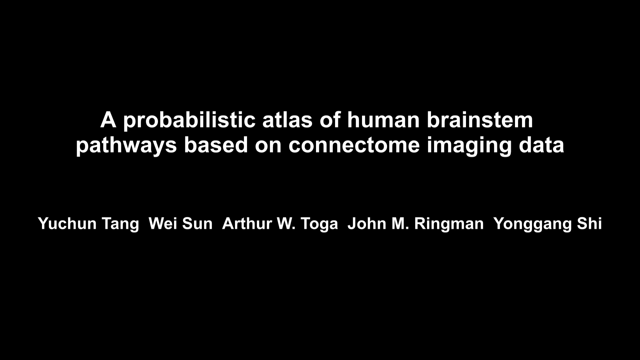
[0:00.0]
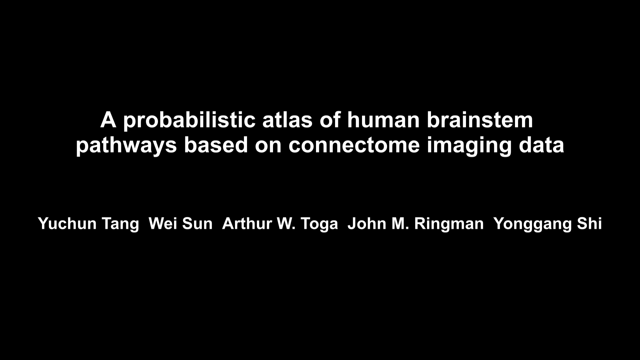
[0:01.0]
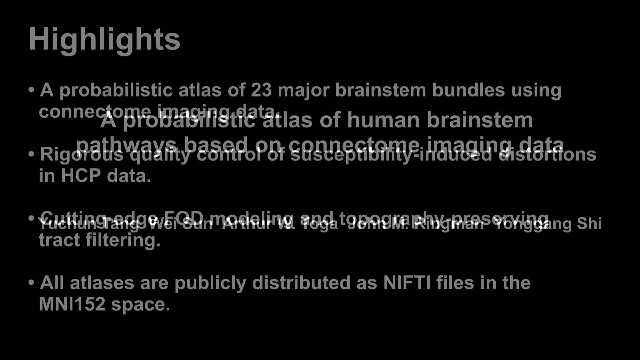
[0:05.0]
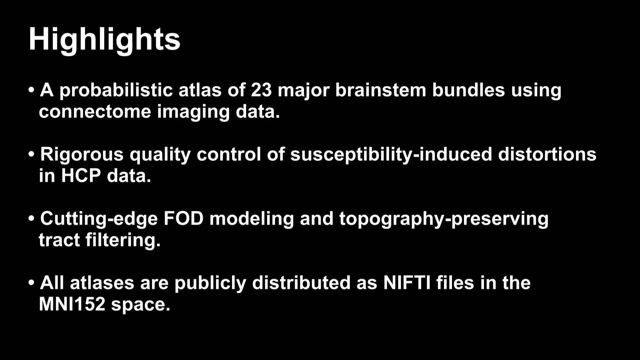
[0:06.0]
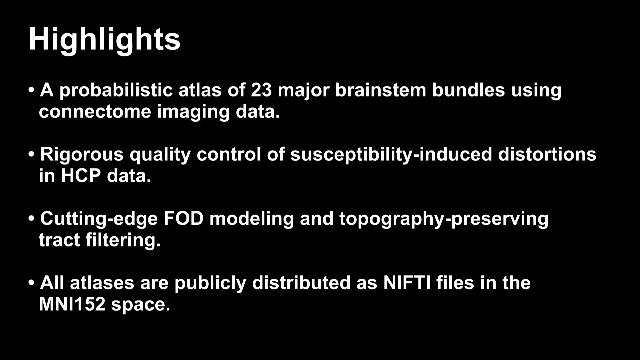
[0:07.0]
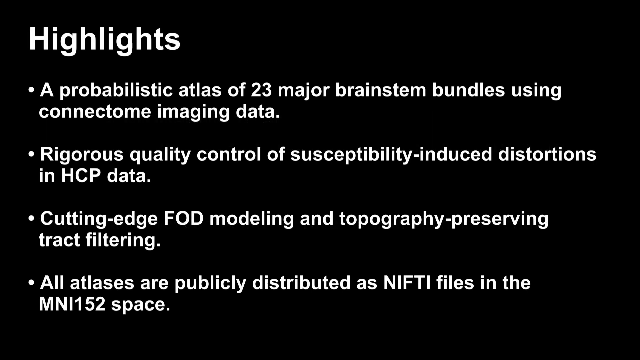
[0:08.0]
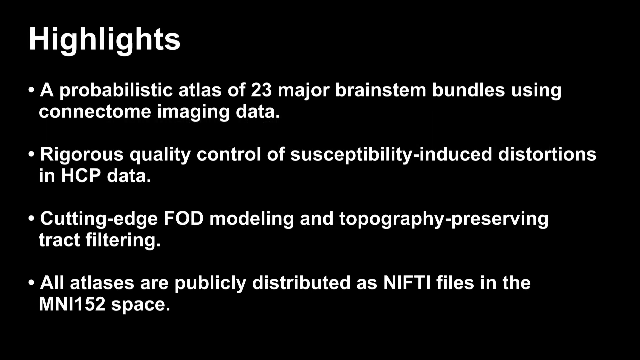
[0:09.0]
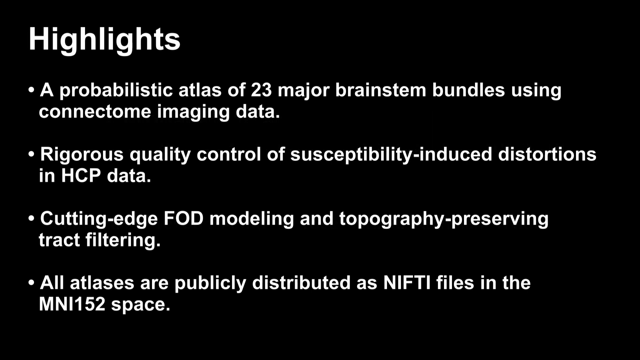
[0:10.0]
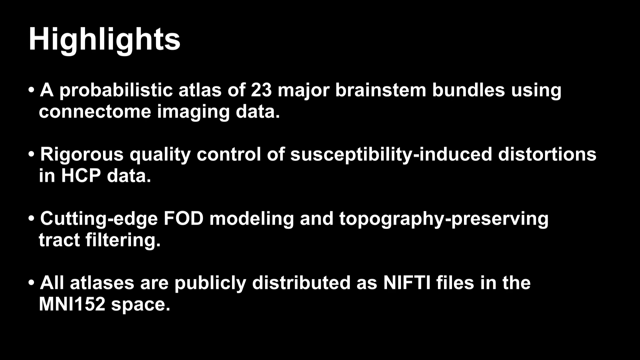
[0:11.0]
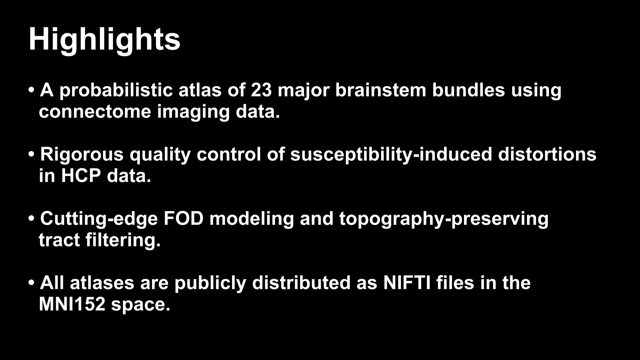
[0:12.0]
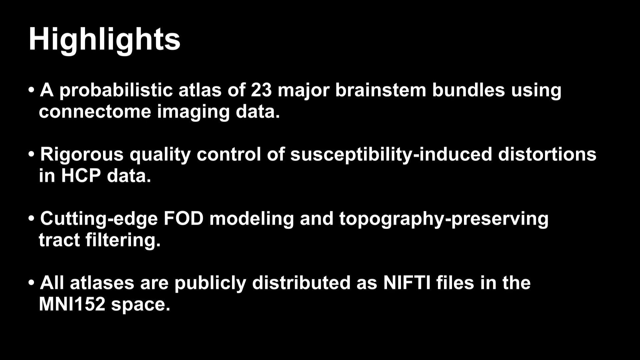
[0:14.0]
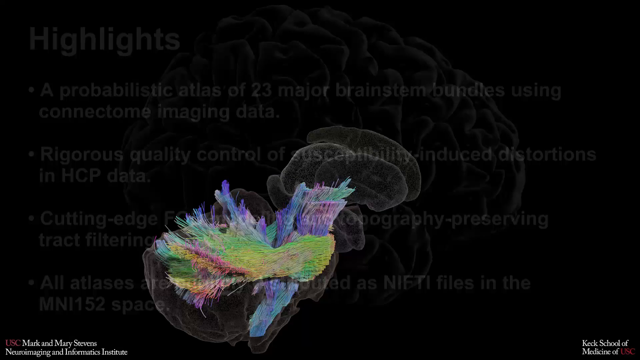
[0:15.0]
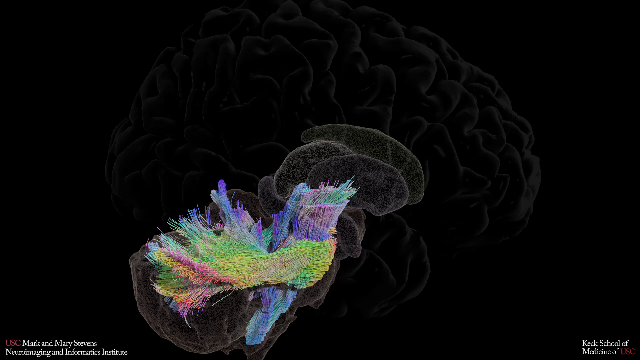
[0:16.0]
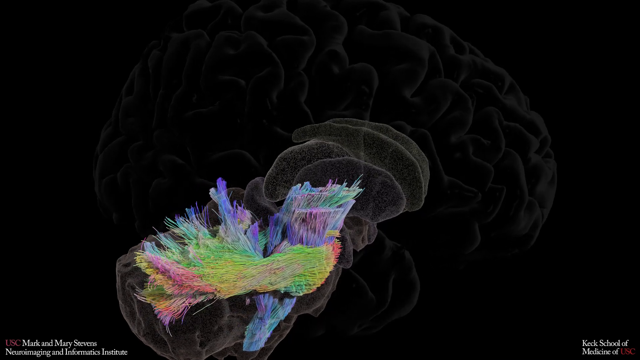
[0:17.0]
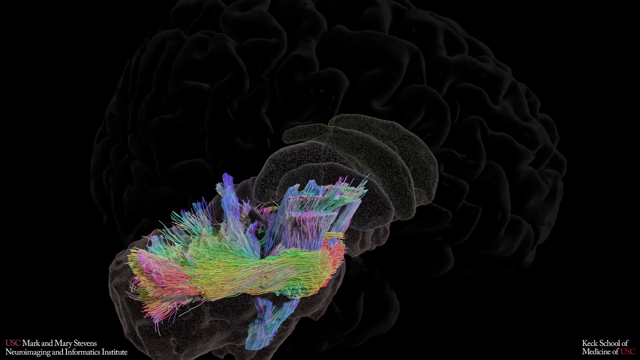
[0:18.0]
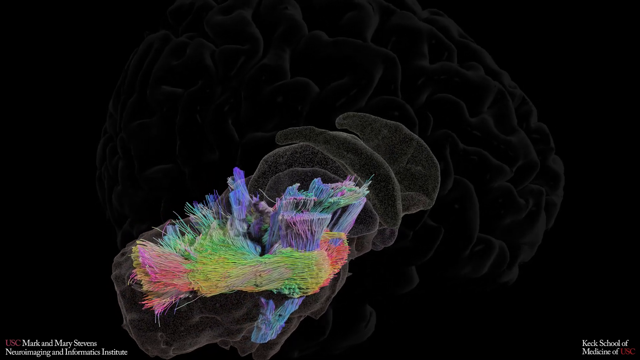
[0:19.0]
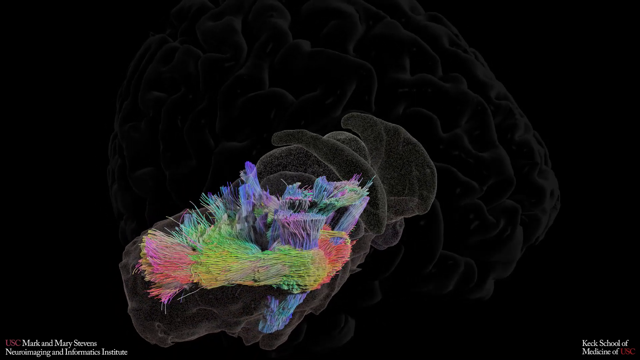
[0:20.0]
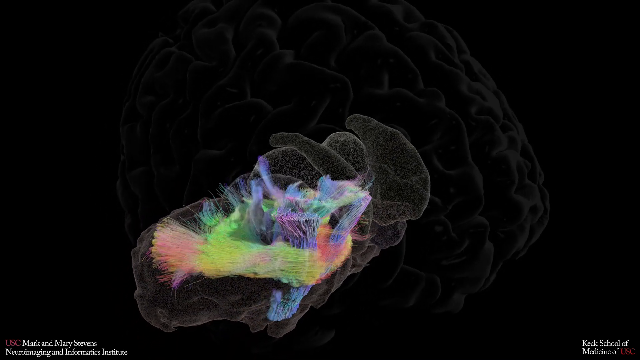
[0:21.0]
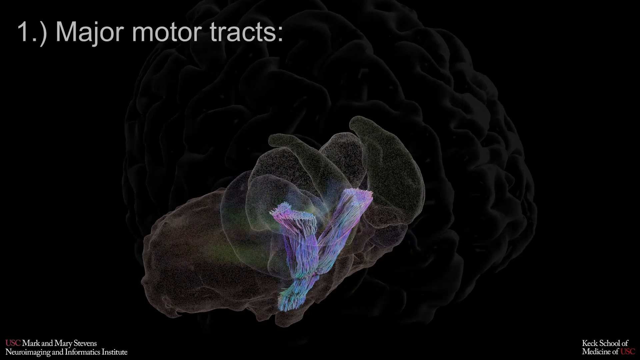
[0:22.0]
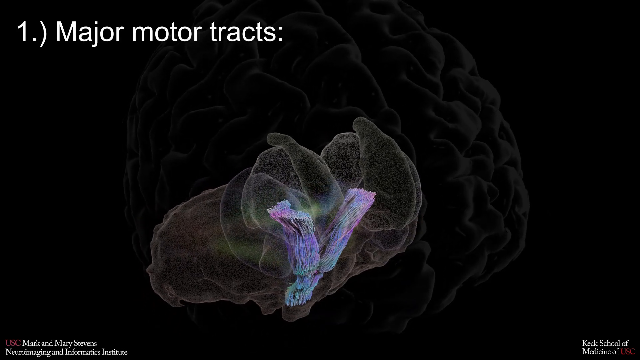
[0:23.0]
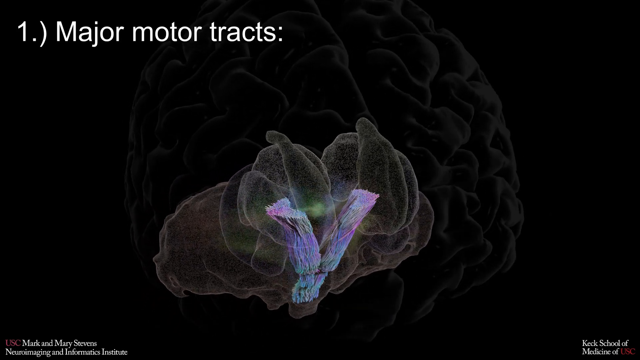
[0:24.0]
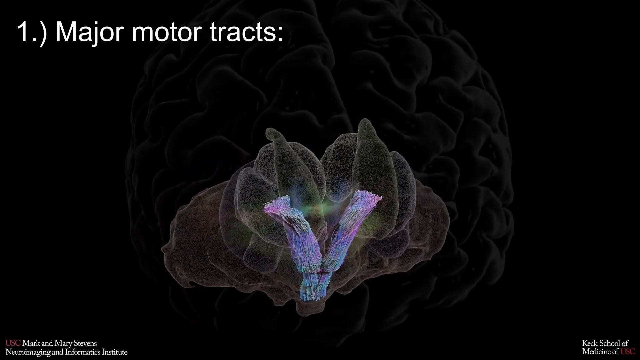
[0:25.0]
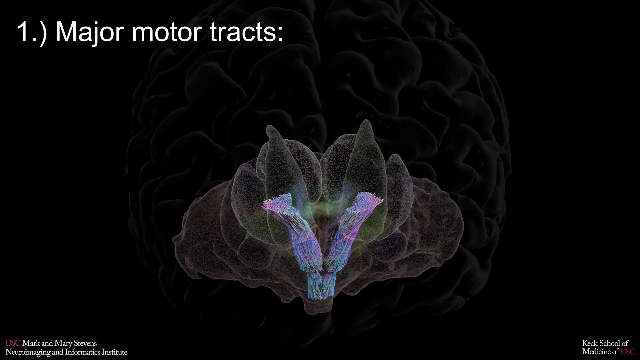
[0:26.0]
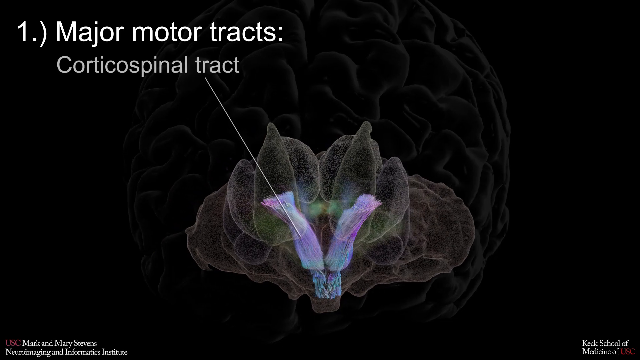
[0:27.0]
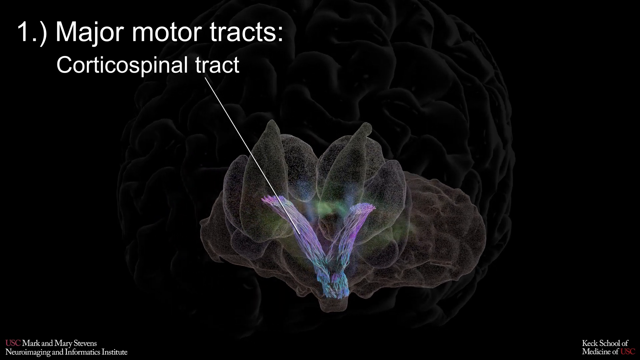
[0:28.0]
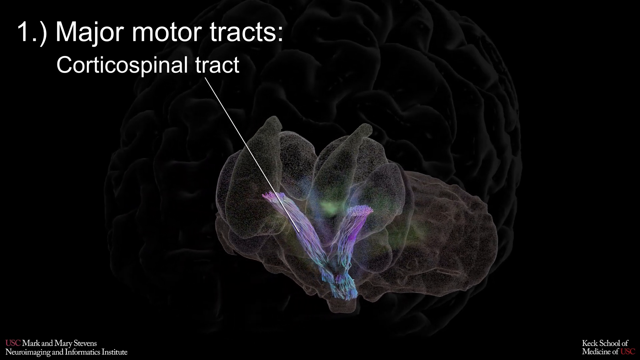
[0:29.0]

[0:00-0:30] White text on screen reads "a probabilistic atlas of human brain stem pathways based on connectome imaging data," along with the names "Yunchen Tang, Wee Sun, Arthur W. Toga, John M. Ringman, and Xiong Yang Shi." This stays on screen for a while, then changes to more text: "highlights: a probabilistic atlas of 23 major brainstem bundles using connectome imaging data, rigorous quality control susceptibility induced distortions and HCP data, cutting edge FOD modeling and topography preserving track filtering, all atlases are publicly distributed as NIFTI files in the MNI152 space." That text also stays on screen for a while before transitioning to what looks like a kind of transparent brain, with another component of the brain in a lighter gray color and many differently colored fibers: purple, green, yellow, teal, blue and more. The camera moves, kind of showing the brain moving with it. Then all of the fiber-looking materials kind of disappear, leaving only two bigger parts. White text appears reading "one major motor tracts," and more white text pops up reading "corticospinal tract," pointing to a purple-green section of the brain. Some additional text pops up before going off the screen.